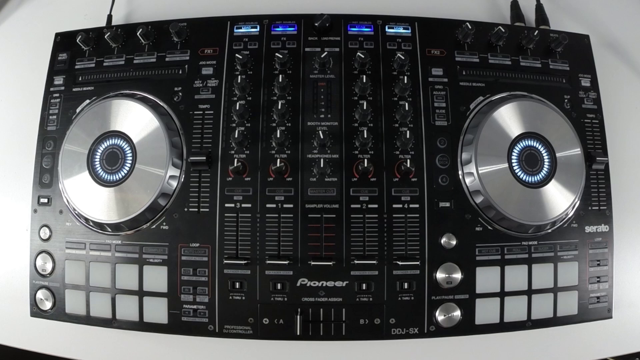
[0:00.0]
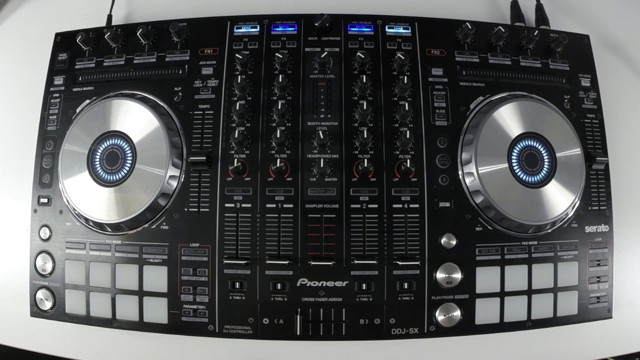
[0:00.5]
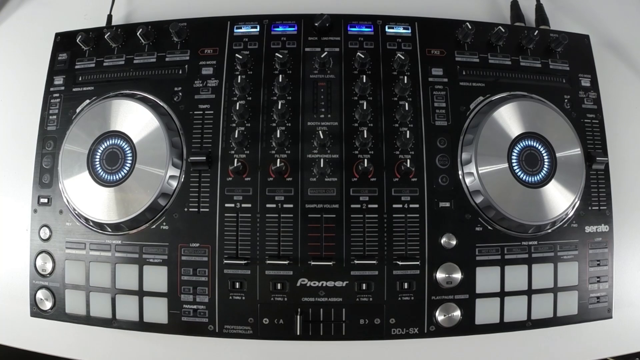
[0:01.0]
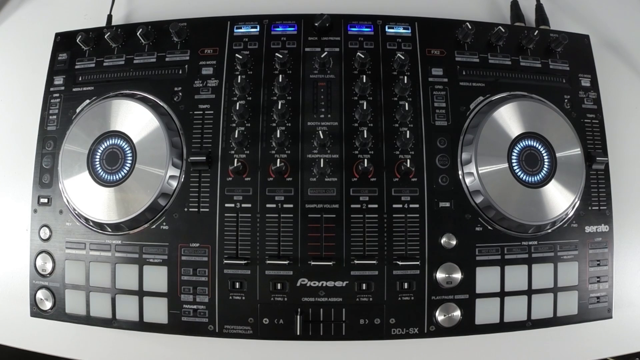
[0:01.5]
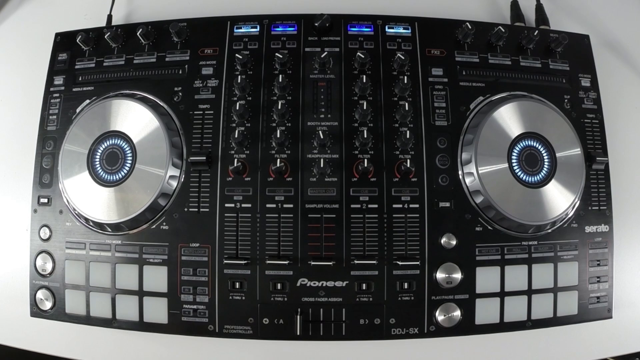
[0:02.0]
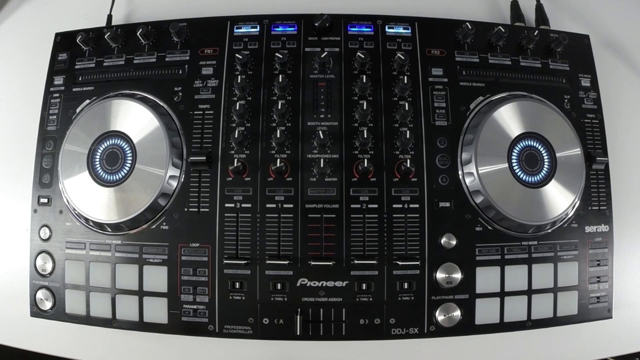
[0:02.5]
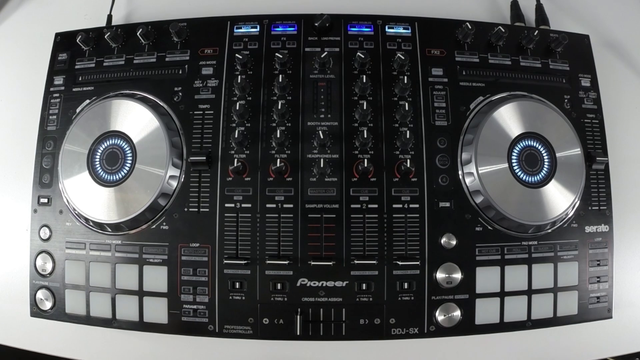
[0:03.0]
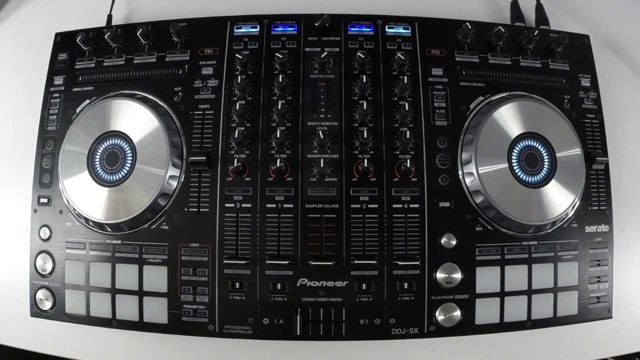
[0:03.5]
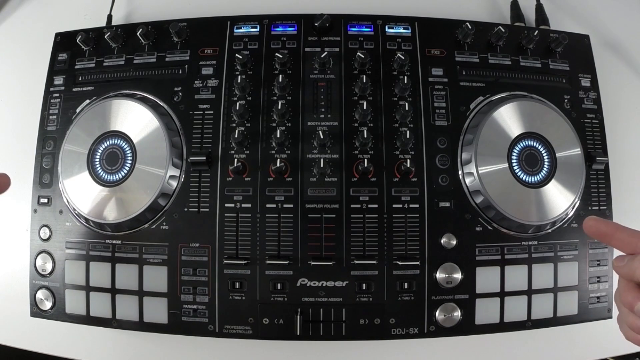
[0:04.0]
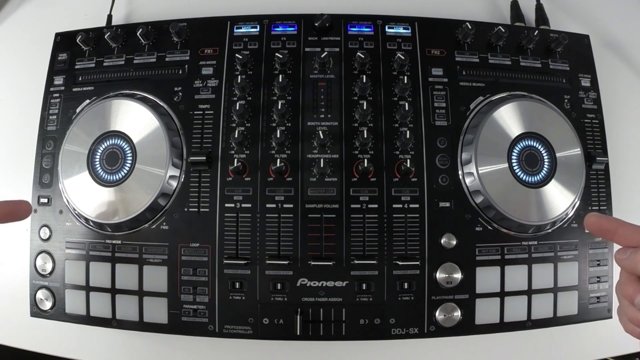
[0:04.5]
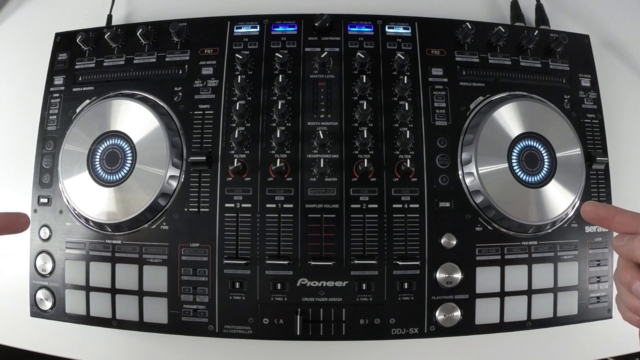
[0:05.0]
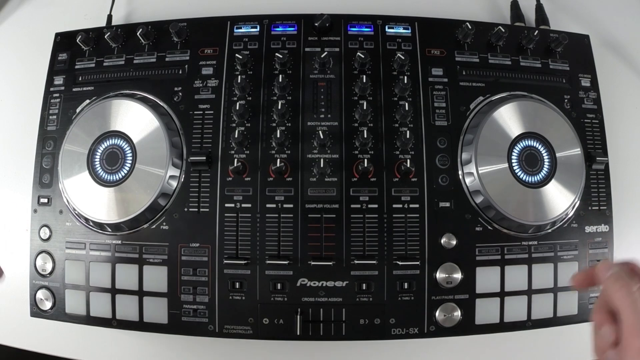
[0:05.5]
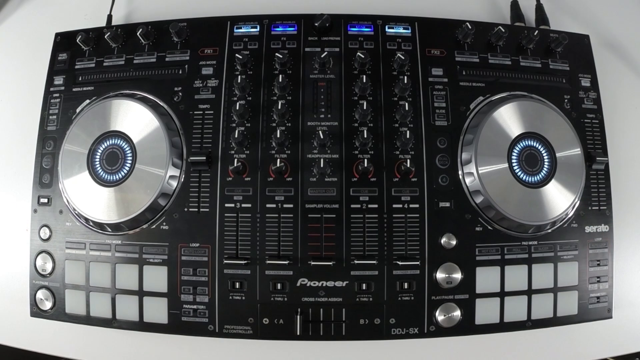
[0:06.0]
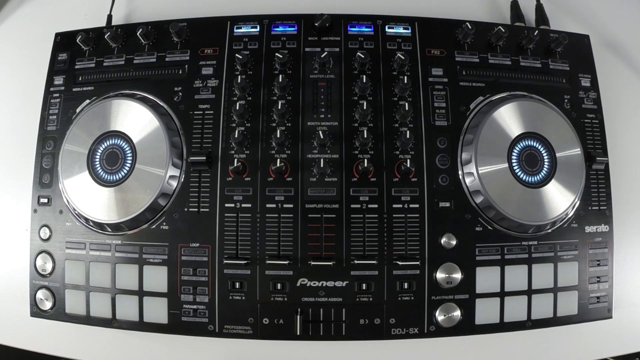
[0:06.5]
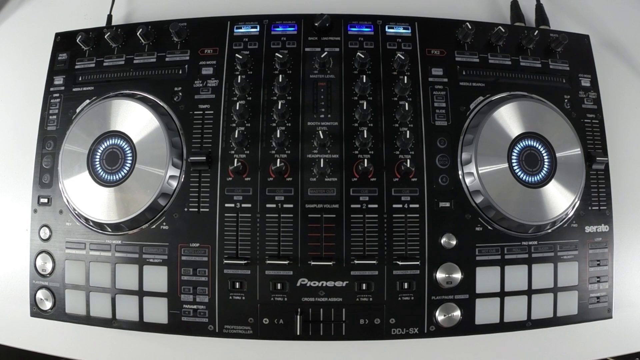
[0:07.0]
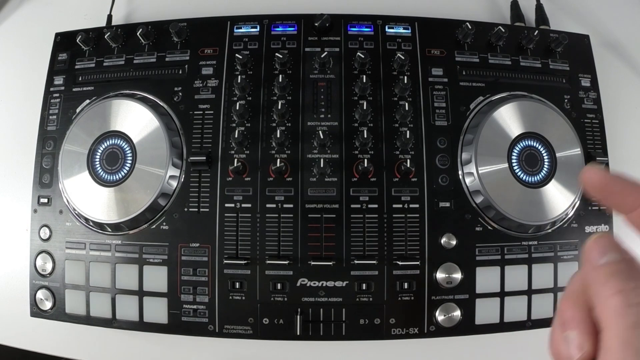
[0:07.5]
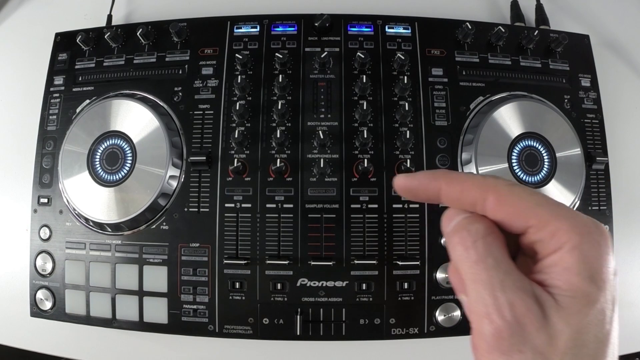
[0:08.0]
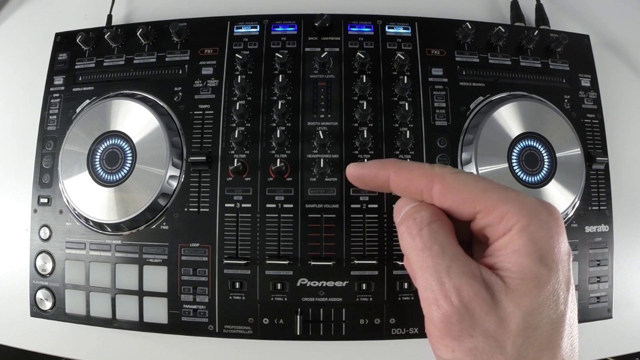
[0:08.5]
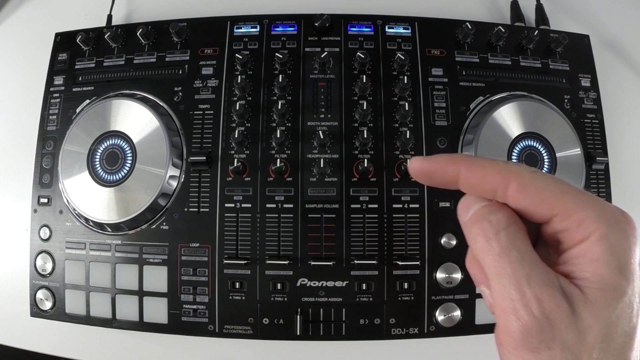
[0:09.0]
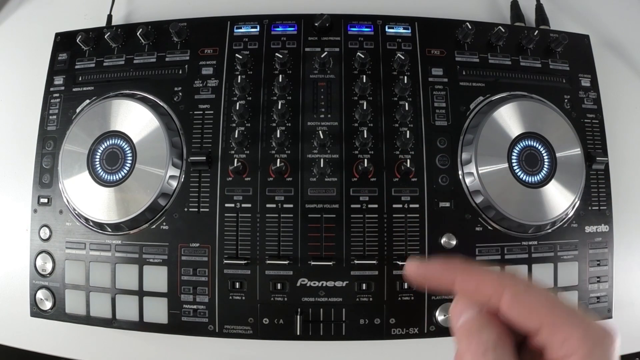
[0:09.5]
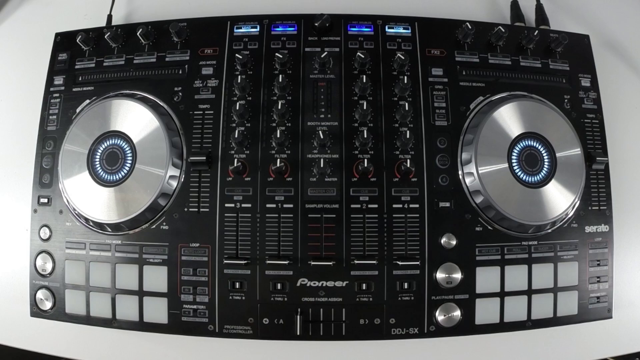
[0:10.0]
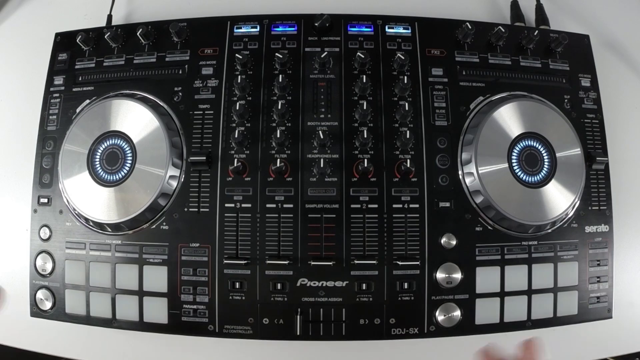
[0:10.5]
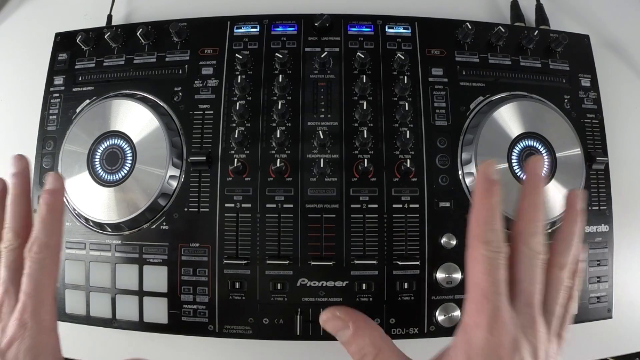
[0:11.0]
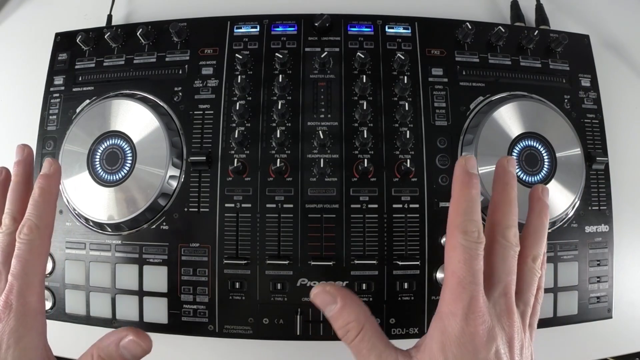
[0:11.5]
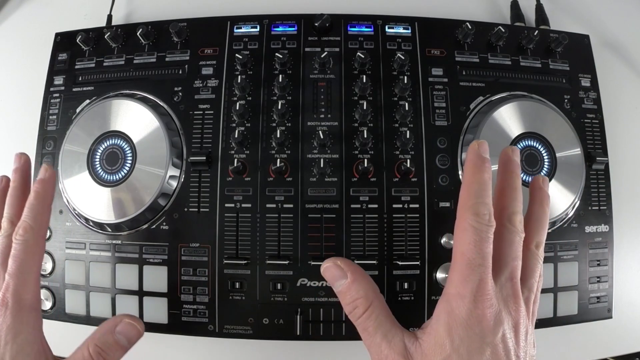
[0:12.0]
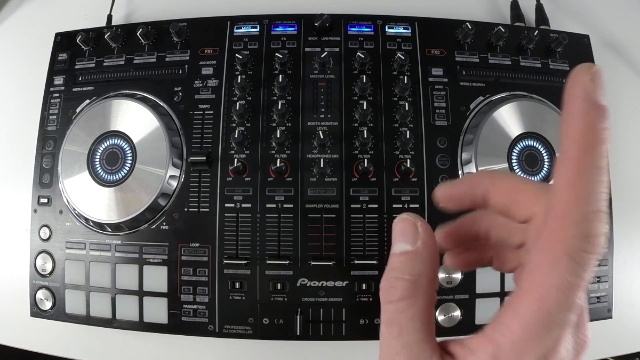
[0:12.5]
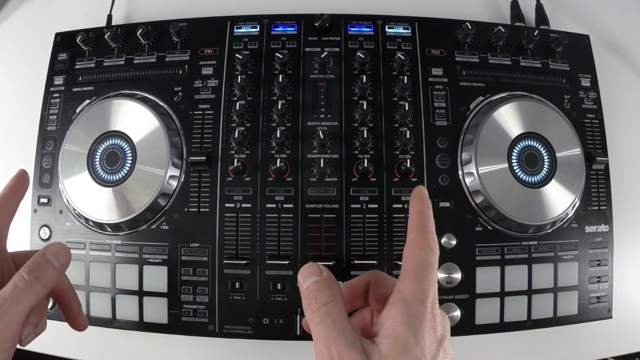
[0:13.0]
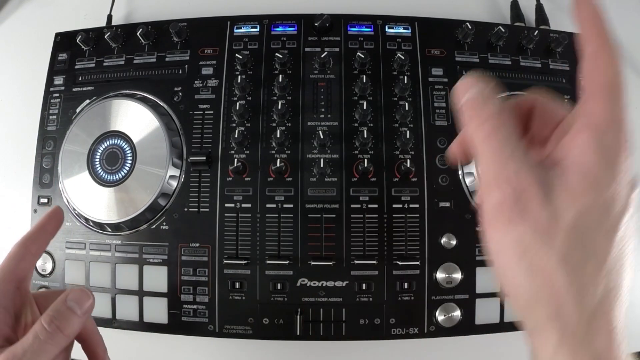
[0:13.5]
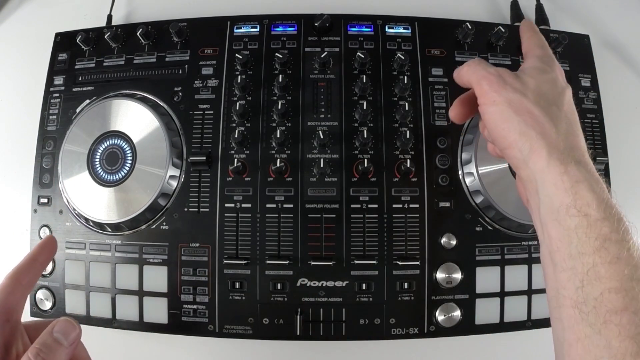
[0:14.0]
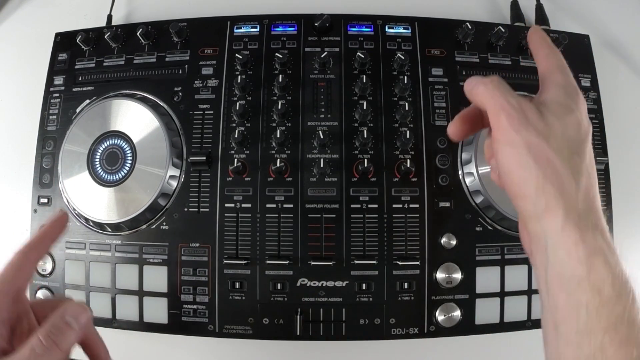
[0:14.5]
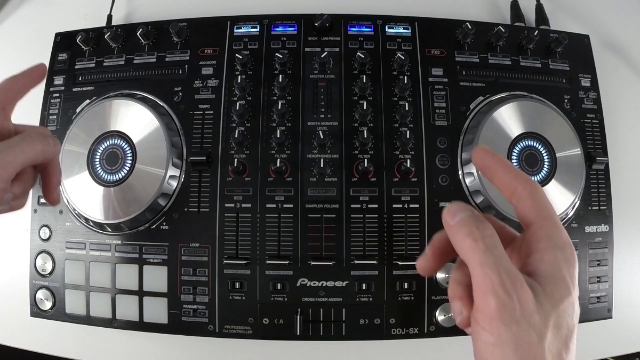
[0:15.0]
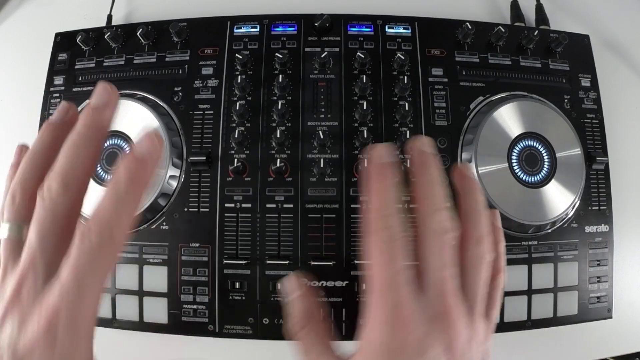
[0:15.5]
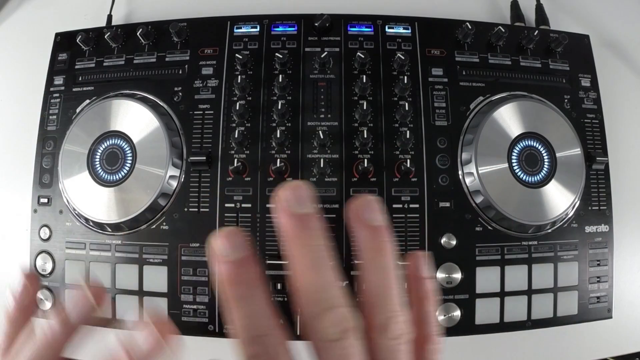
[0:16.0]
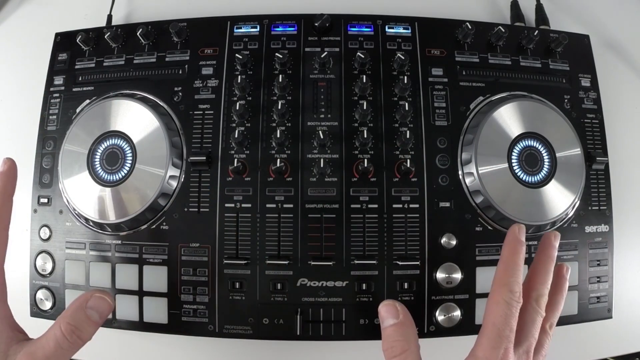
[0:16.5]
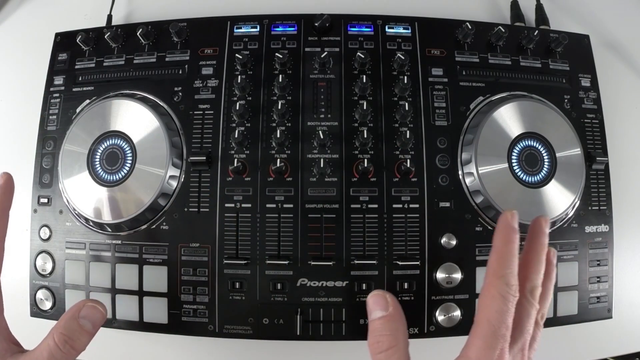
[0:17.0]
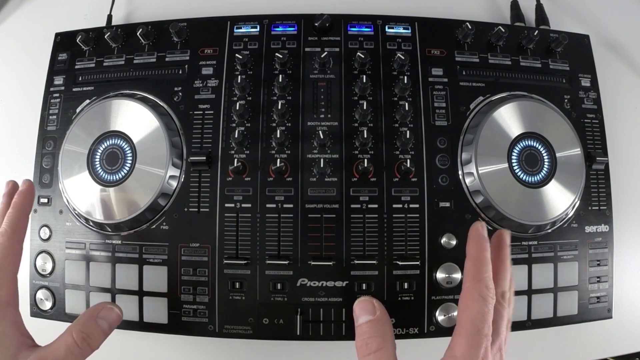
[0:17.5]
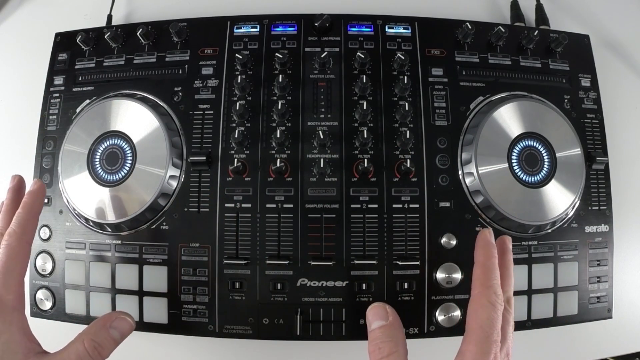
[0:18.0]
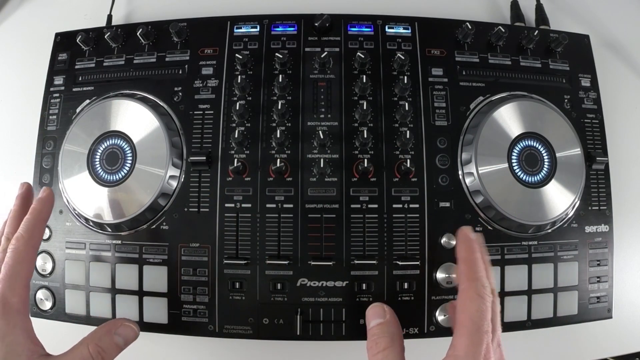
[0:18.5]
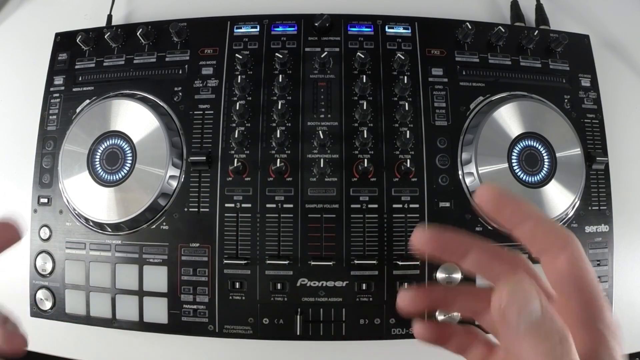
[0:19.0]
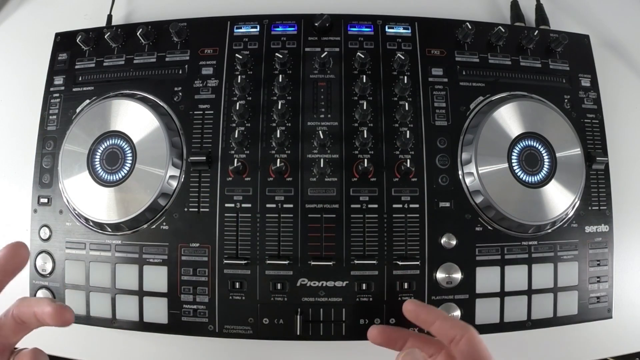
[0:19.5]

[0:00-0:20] A full-screen image shows a Pioneer mixing DJ console, which appears to be quite elaborate and technical, with lots of controls and dials. It is mainly black, with some silver buttons and some black knobs for turning. Two big silver jog wheels are on either side. Underneath the jog wheels are two rows of four rubberised keys on each side. Above the jog wheels, again on either side in a symmetrical arrangement, are four other turning knobs. In the middle of the console are four rows of vertical knobs, five in each row, with some sort of output indicator at the top that is not really legible. The numbers 1, 2, 3 and 4 are visible below the vertical rows, perhaps indicating the volume lever for each track. The image stays the same, with the console filling the whole screen, and someone's hands intermittently appear, pointing to different parts of the console. The fingers are quite expressive, seemingly explaining things: they fan out at times, come in at times, and point at other times, as if to emphasise points.